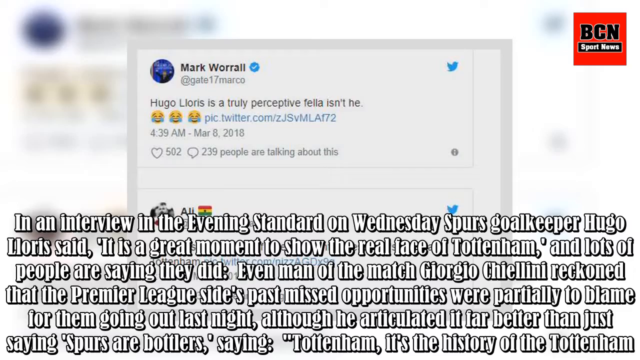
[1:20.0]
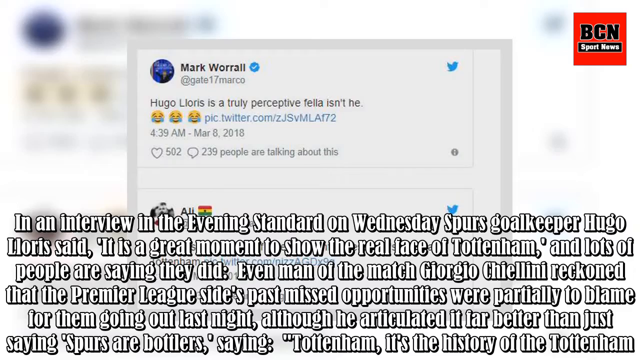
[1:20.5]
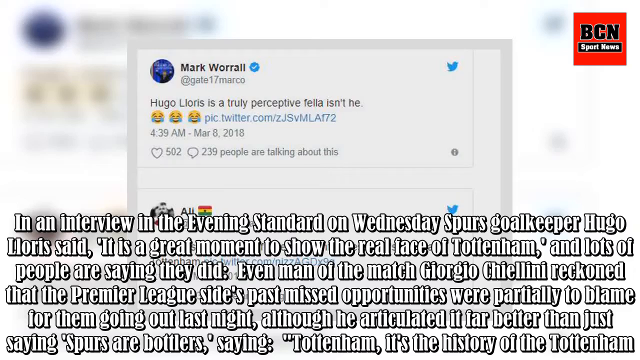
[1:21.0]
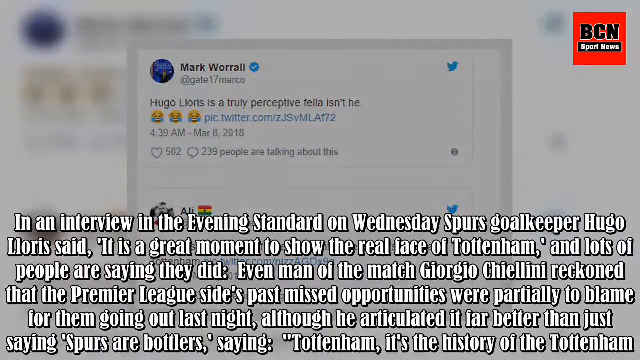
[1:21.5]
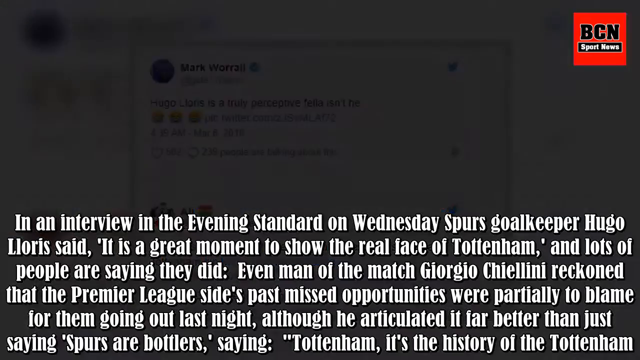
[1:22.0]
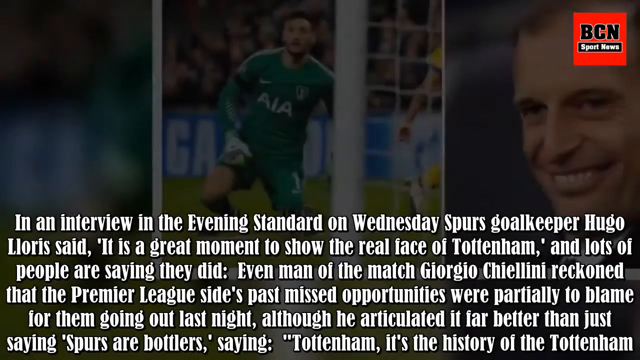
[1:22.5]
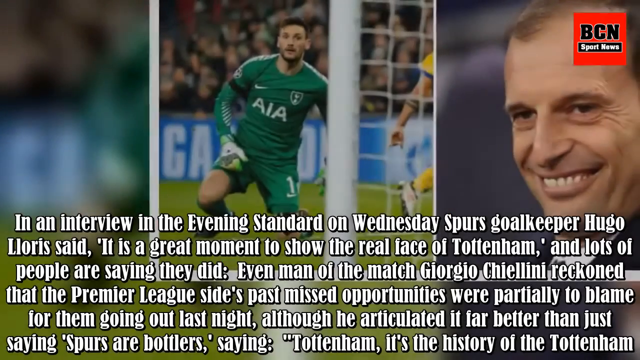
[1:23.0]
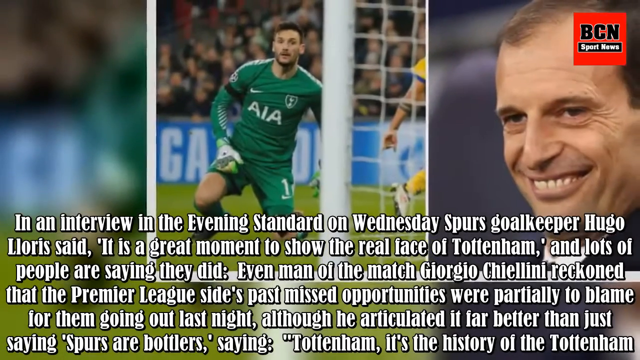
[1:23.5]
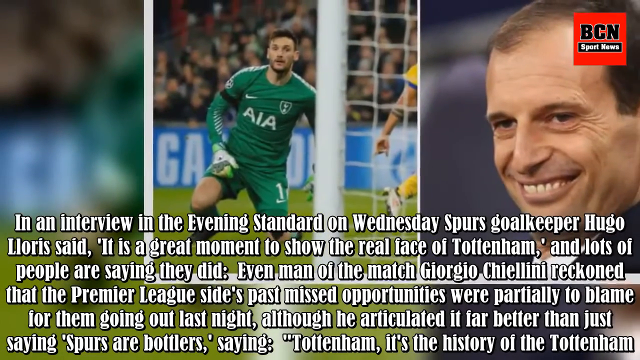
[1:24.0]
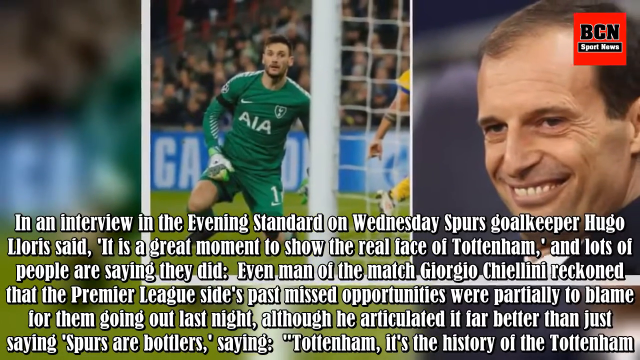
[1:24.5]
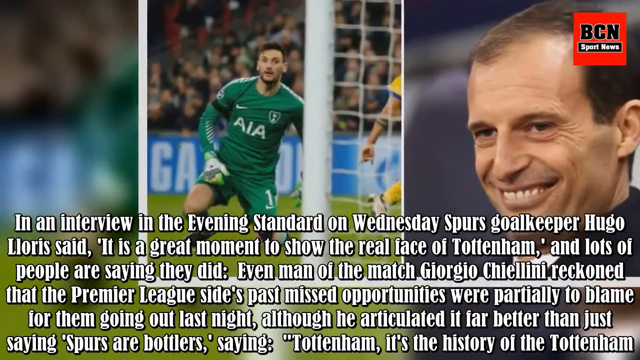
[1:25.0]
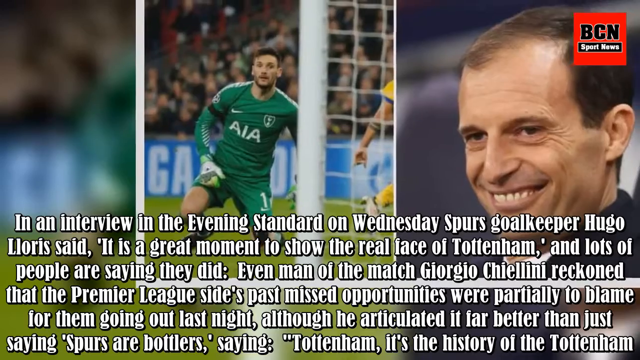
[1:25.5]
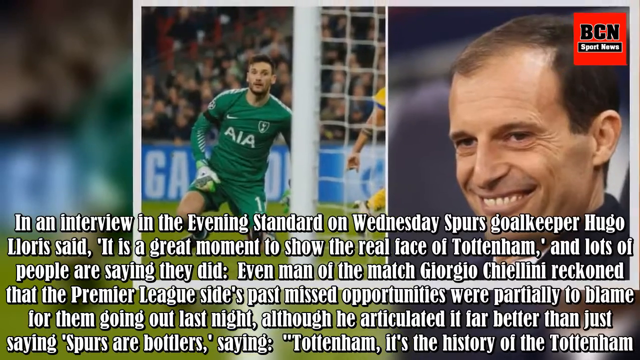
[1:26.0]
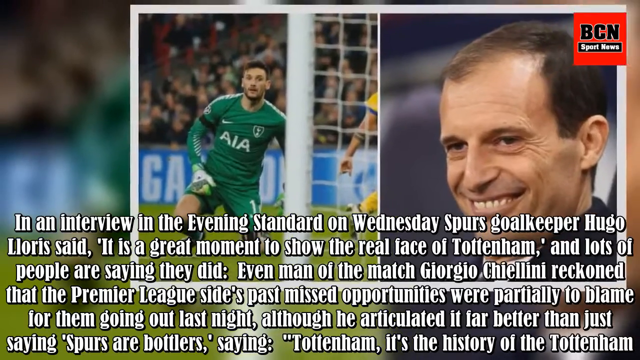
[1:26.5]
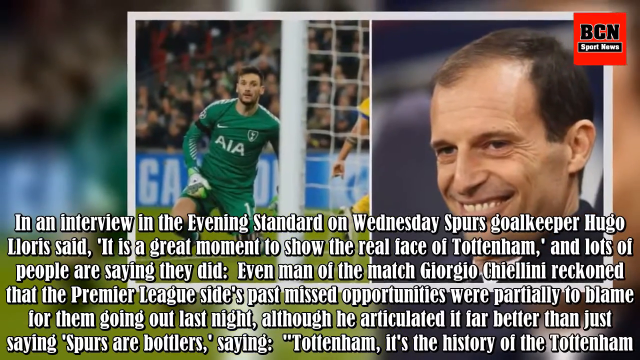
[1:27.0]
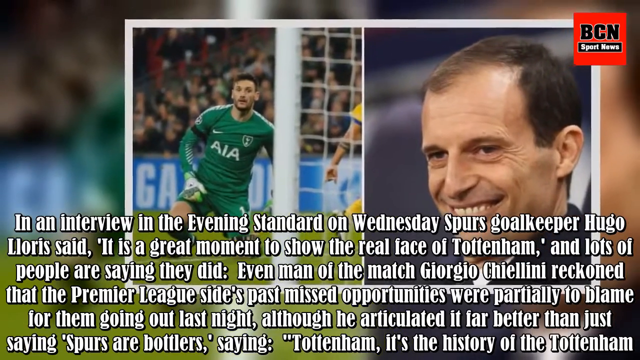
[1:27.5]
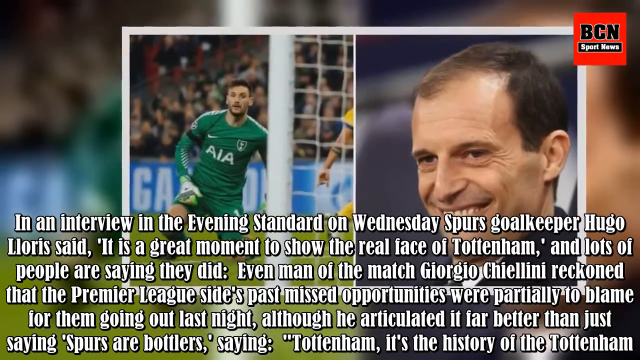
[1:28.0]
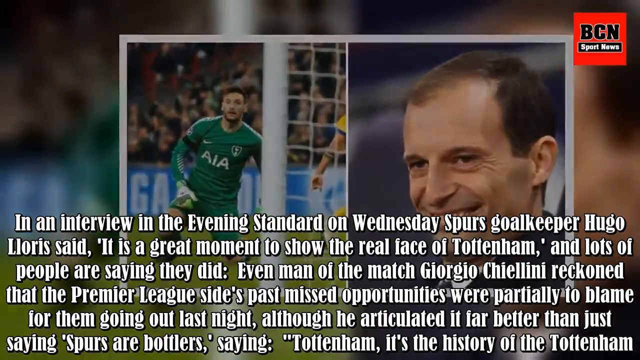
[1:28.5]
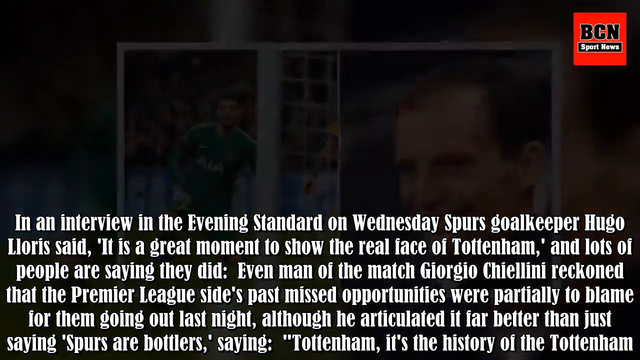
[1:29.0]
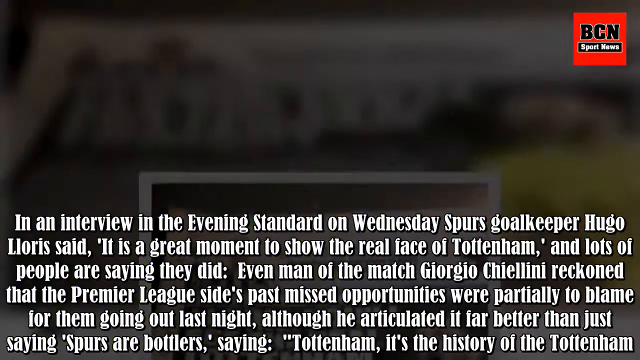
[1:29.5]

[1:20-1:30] The captions, which take up almost half of the screen, remain at the bottom with the two tweets in the background. The scene then changes while the captions stay. In the background are two images. The one on the left shows a soccer player, a goalie, in a green and white uniform, with a soccer goalpost visible to the right side in front of them. The picture on the right shows a smiling man who appears to be a coach; he wears a suit, has brown hair and a receding hairline, and is looking toward the left side. The view fades and a picture rises.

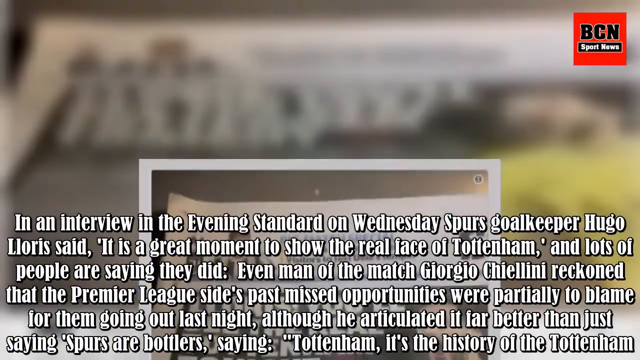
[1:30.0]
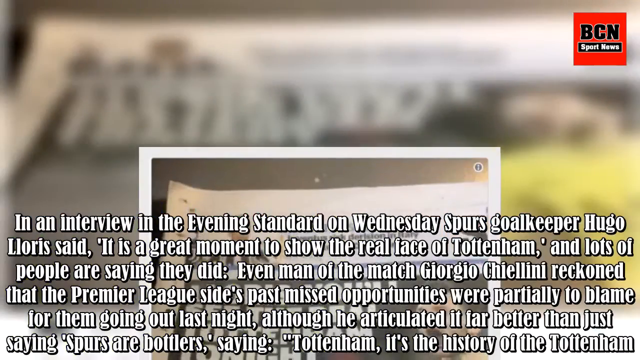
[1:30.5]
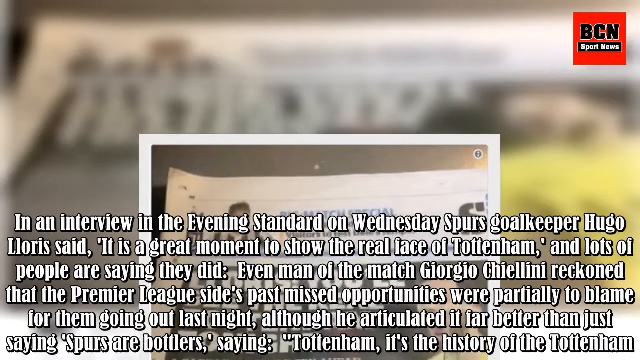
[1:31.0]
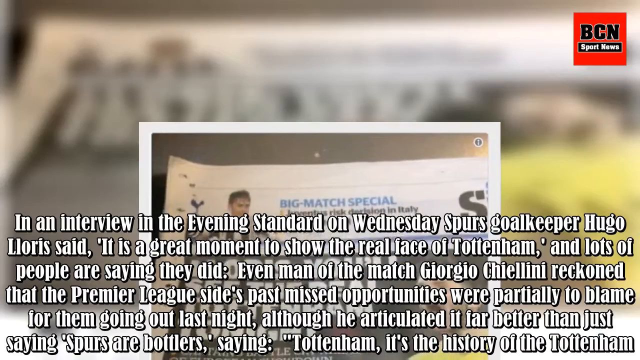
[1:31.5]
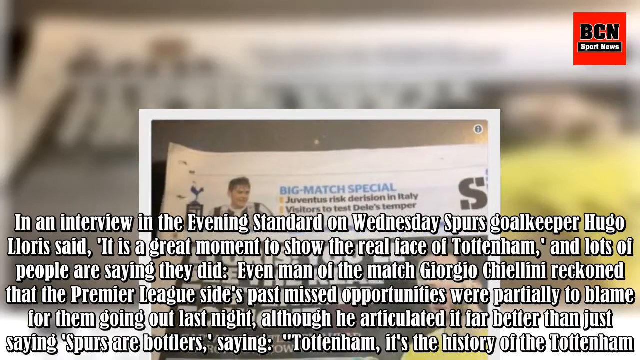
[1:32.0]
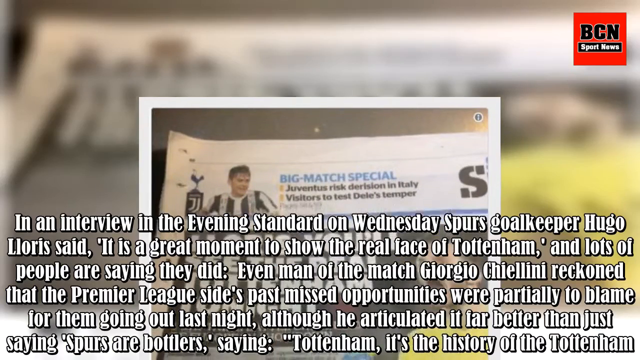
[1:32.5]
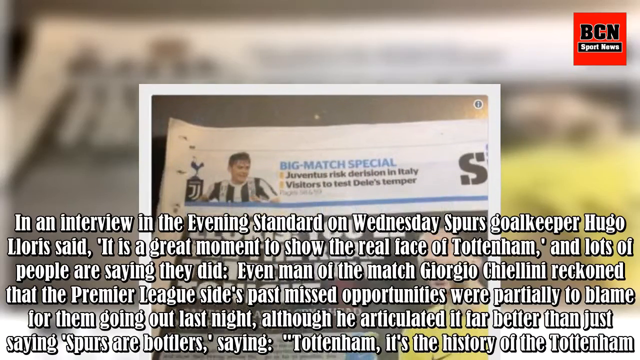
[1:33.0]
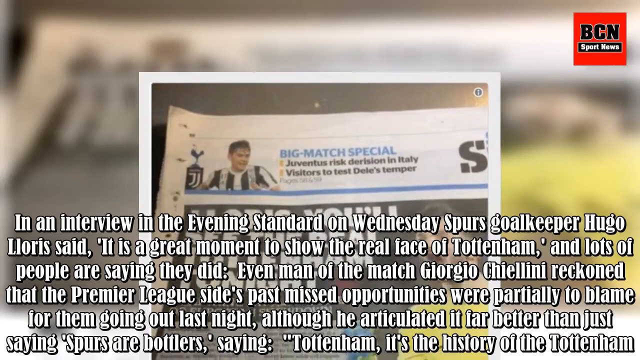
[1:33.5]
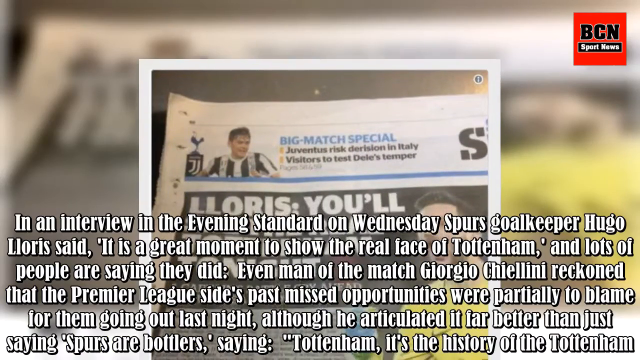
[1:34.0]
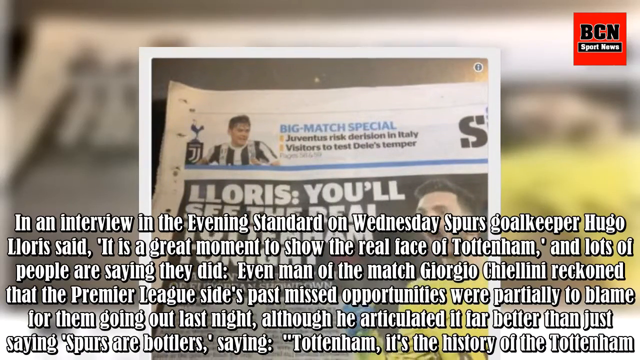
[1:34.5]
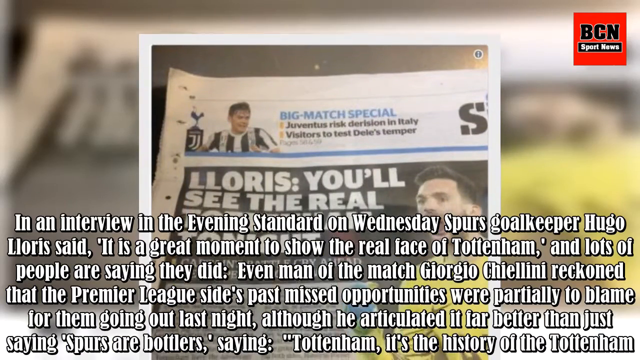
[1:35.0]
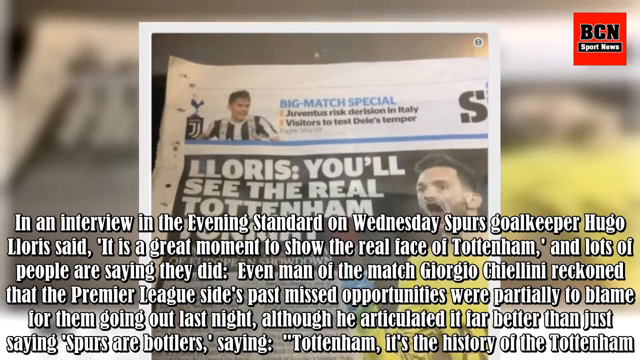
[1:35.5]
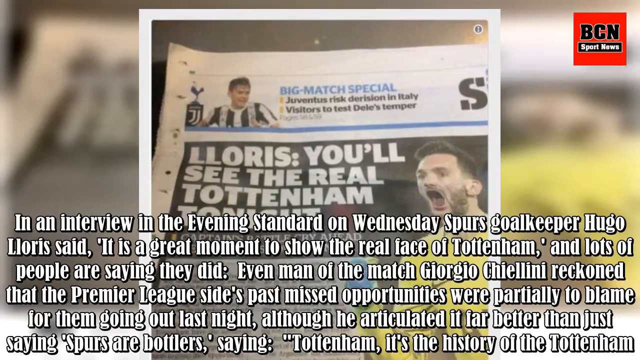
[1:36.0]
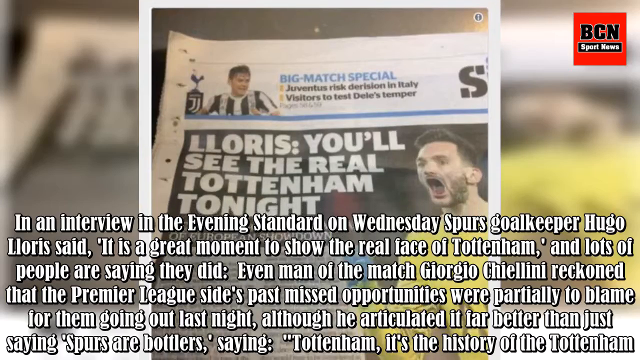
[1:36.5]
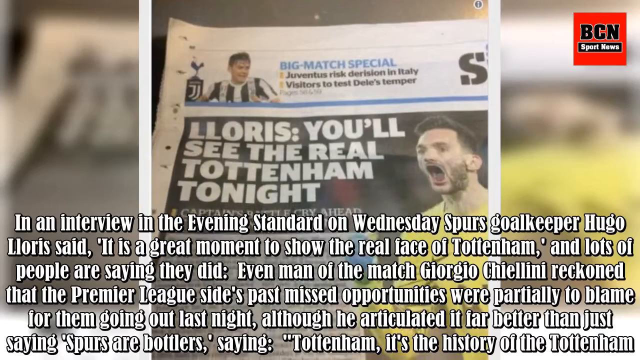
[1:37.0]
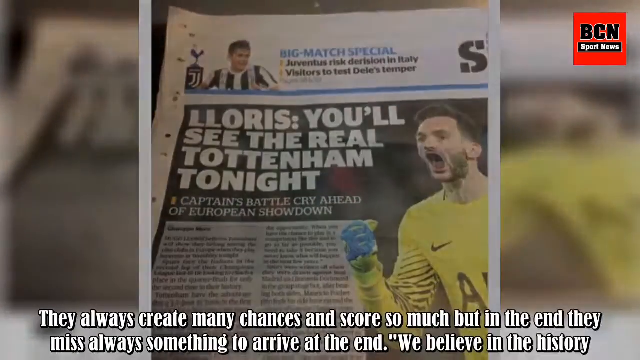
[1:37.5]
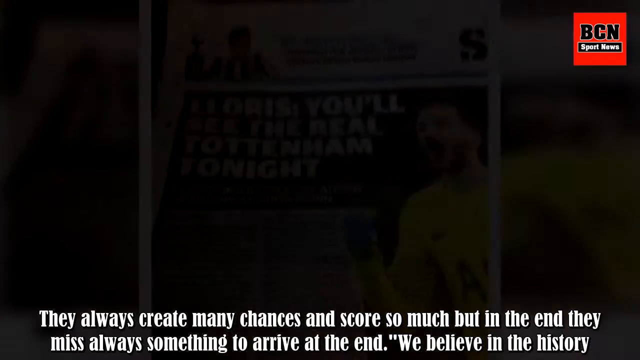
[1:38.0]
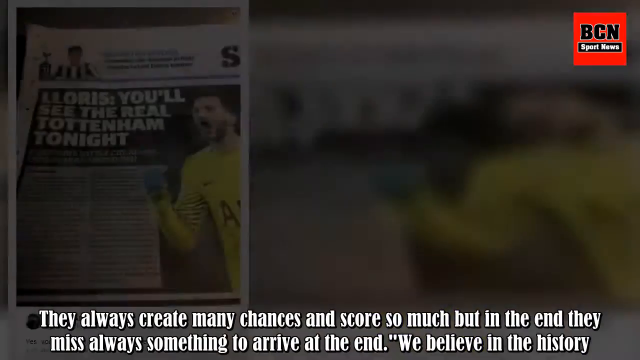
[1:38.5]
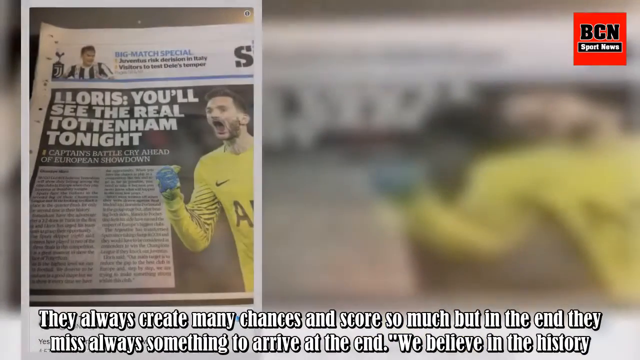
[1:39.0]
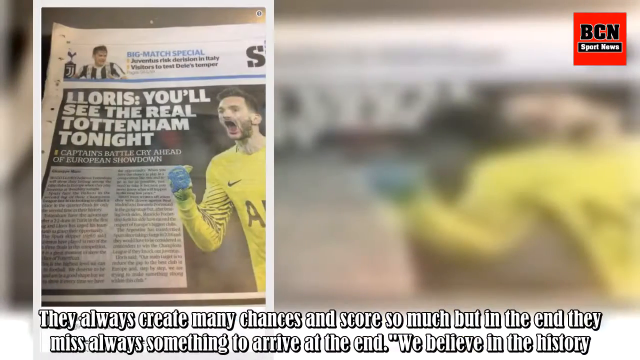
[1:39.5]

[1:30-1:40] The rising picture shows the newspaper front page seen at the beginning, with the goalie yelling and looking toward the left side. The same front page then appears on the left side, and the captions at the bottom change to read: "They always create many chances and score so much, but in the end they miss always something to arrive at the end. We believe in the history." The front page moves to the right side.